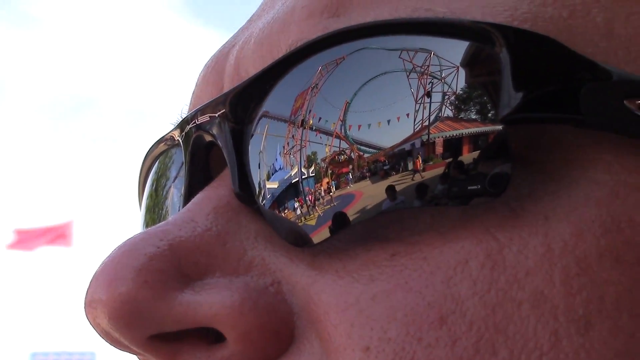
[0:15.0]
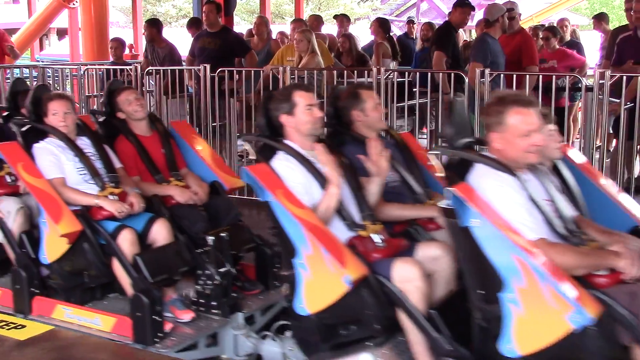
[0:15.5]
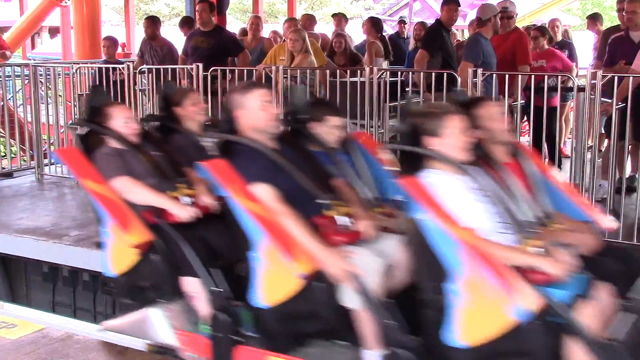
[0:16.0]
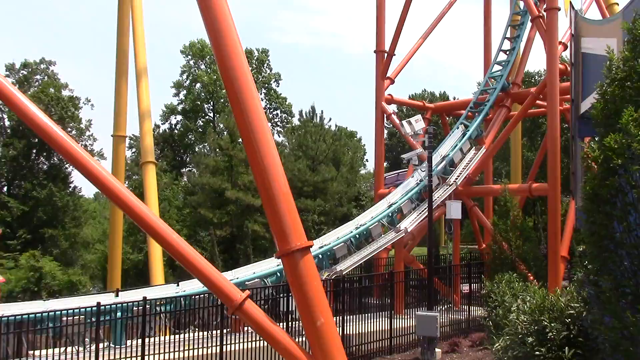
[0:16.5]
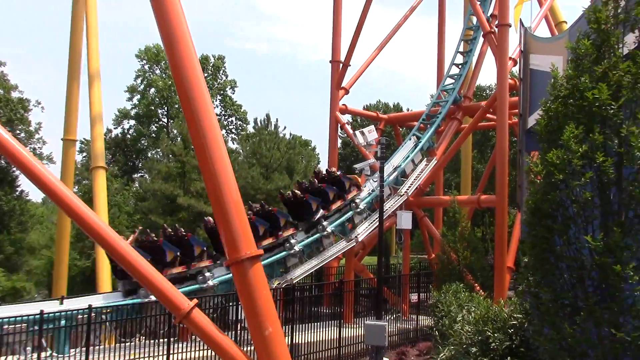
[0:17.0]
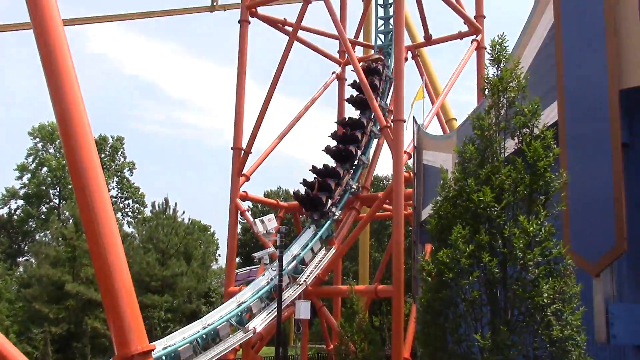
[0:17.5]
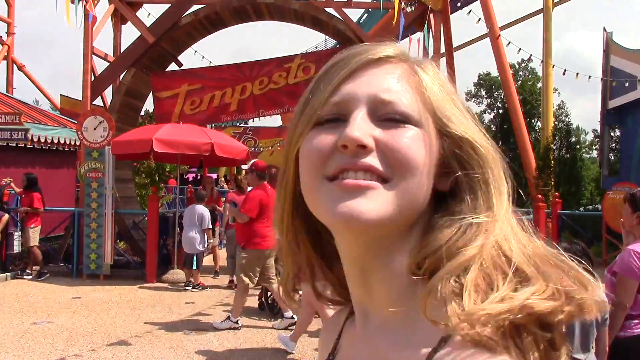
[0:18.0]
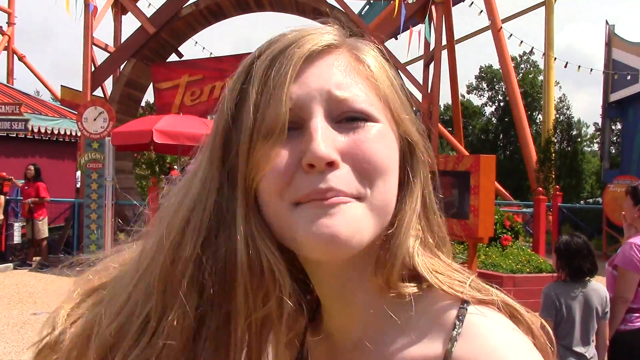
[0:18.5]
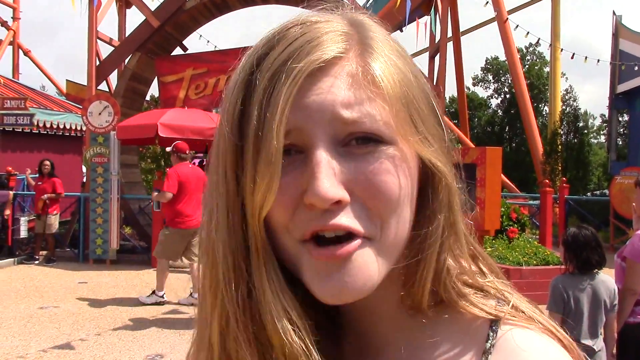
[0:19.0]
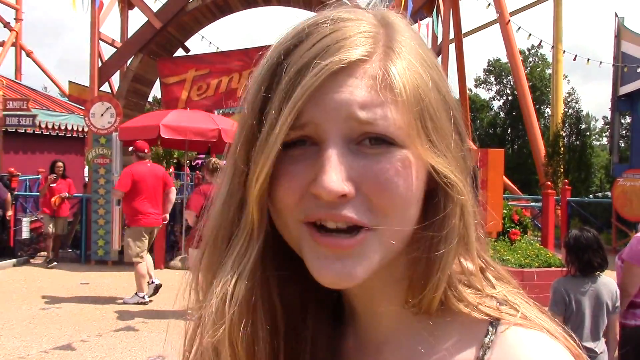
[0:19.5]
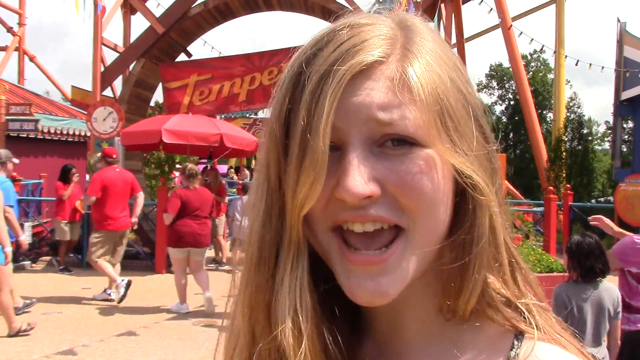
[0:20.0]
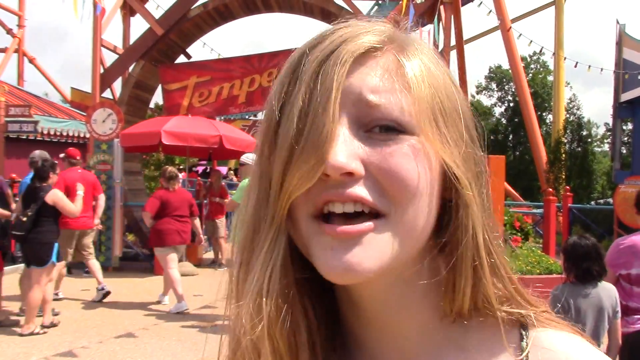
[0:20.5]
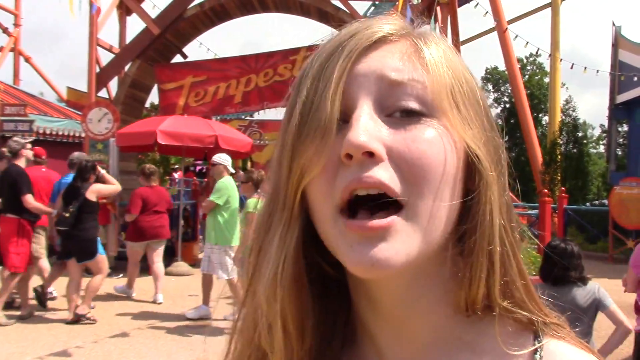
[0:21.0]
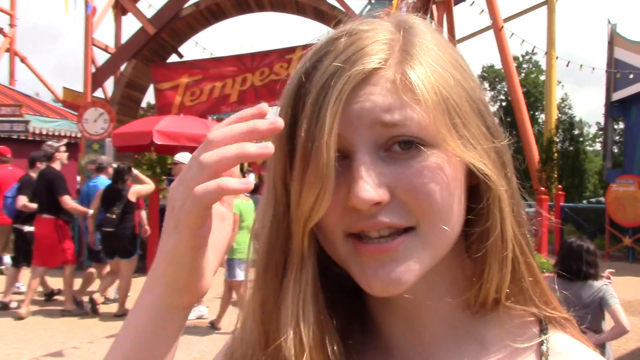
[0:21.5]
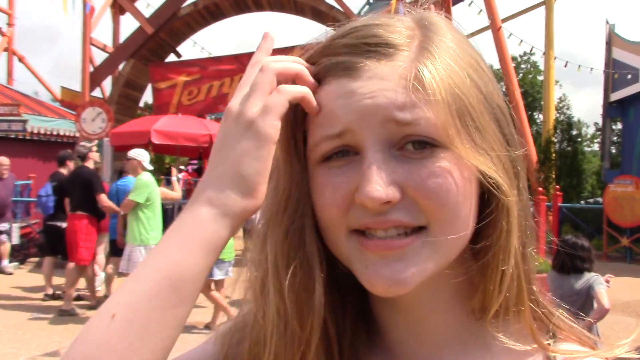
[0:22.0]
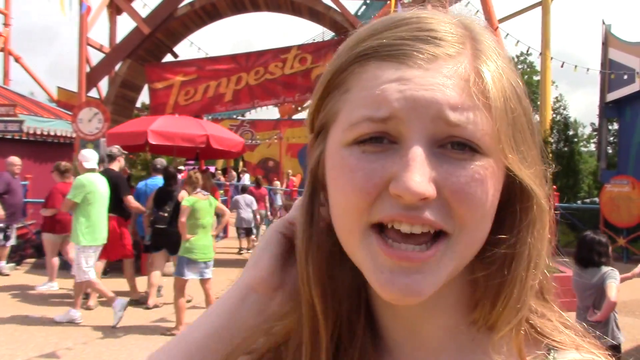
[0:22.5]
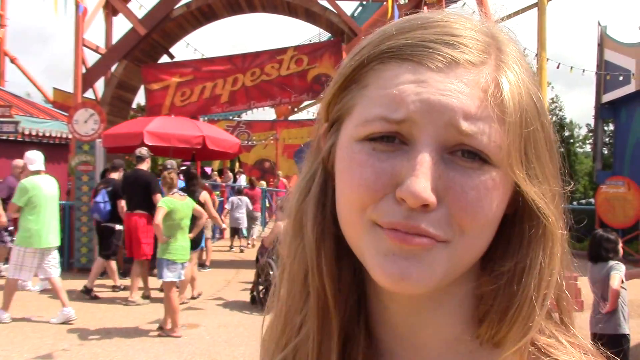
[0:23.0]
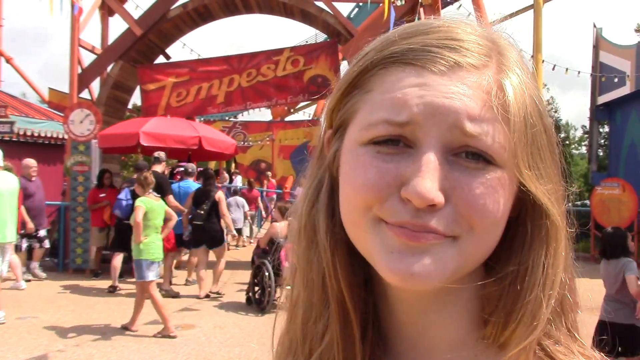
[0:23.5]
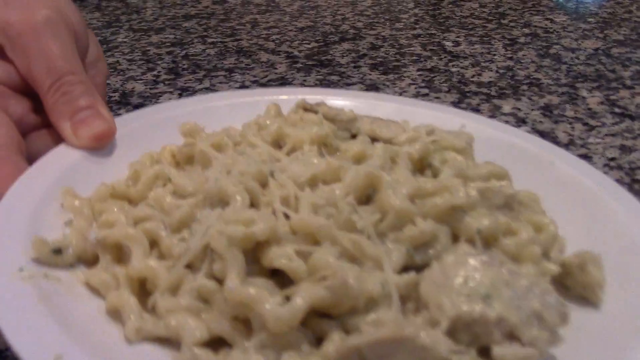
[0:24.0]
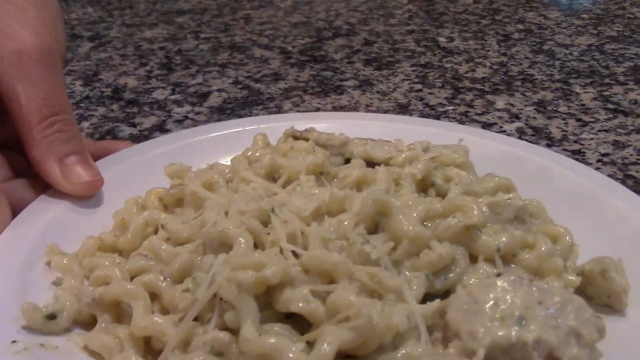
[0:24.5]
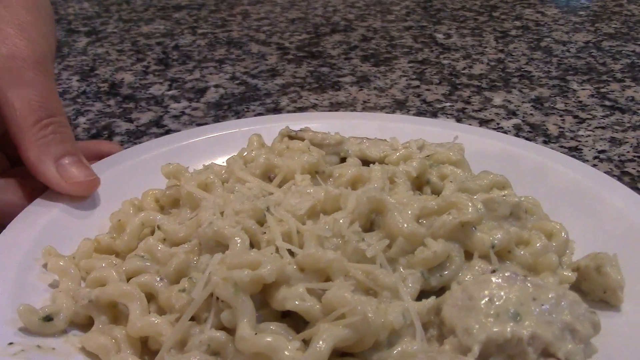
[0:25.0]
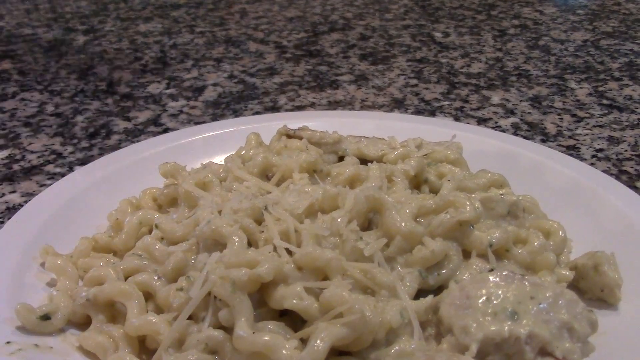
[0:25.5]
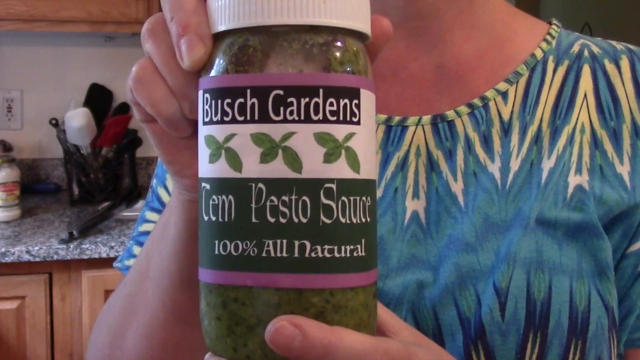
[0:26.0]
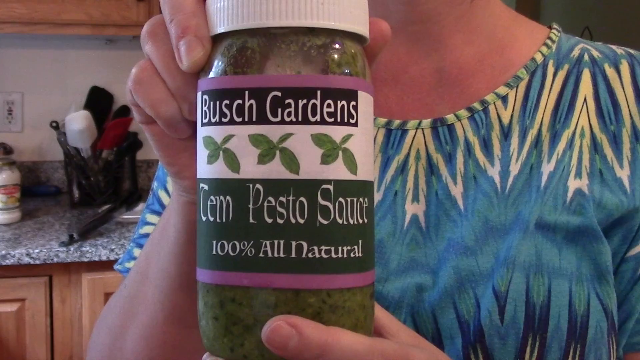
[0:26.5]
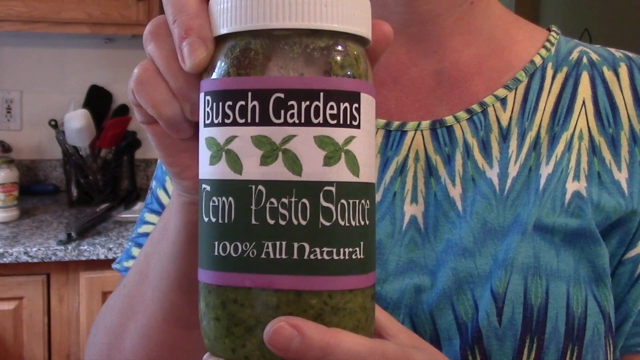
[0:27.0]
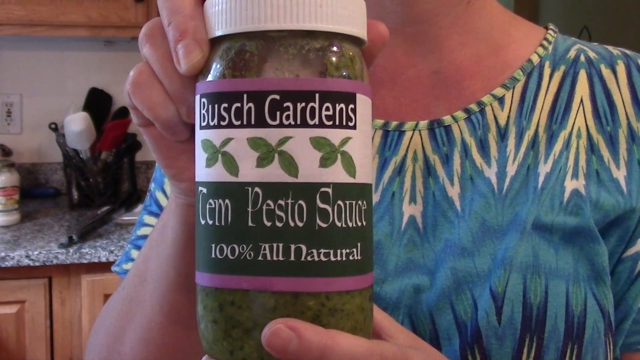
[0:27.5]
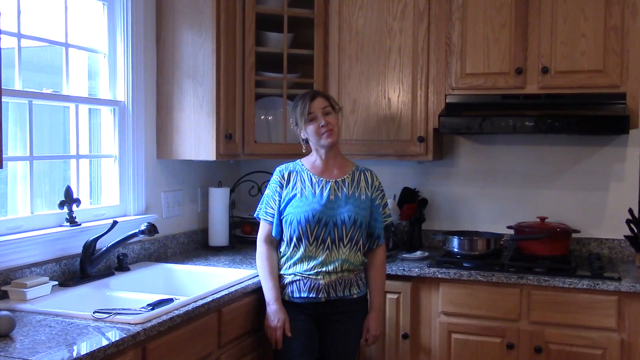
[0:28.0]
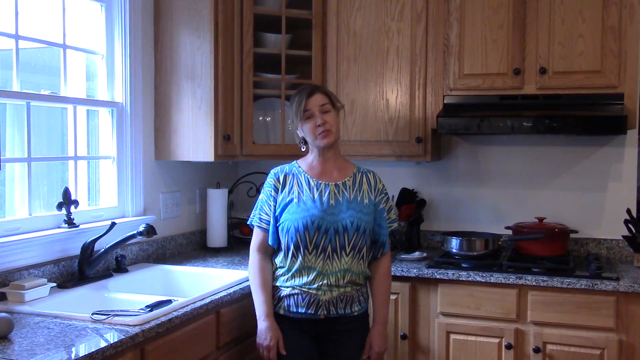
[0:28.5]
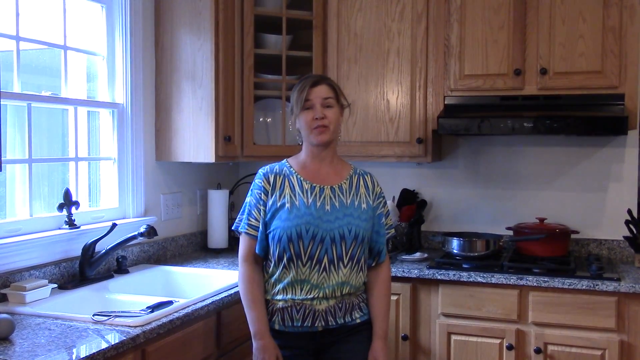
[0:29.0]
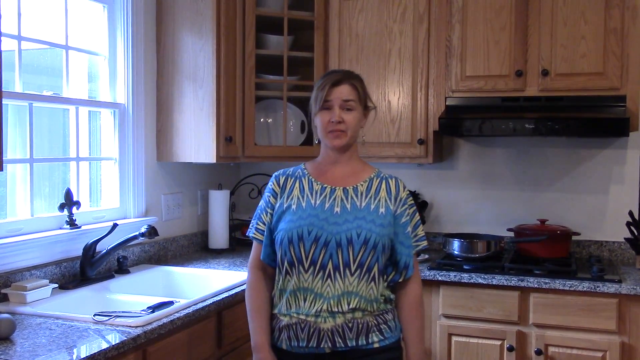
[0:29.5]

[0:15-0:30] The roller coaster rides at Busch Gardens continue. One roller coaster starts to accelerate and goes up a giant loop, with a bunch of people on the ride; the roller coaster and its tracks are red. The scene cuts to a close-up interview of a young white girl standing in front of one of the roller coasters, talking to the camera. She looks quite animated, possibly describing what she is seeing and maybe her feelings about riding the coaster, and she looks anxious yet excited. The video then cuts to a completely different scene: a plate is placed on a granite countertop, with what looks like pasta in some type of white sauce on it. A mid-shot follows of a woman in a blue-designed shirt holding up a bottle of green liquid. The shot pans out to show her standing in the corner of her kitchen, speaking to the camera. The home looks modern; on the left are the kitchen sink and a window looking outside, and behind her are brown wooden cabinets and a stovetop.